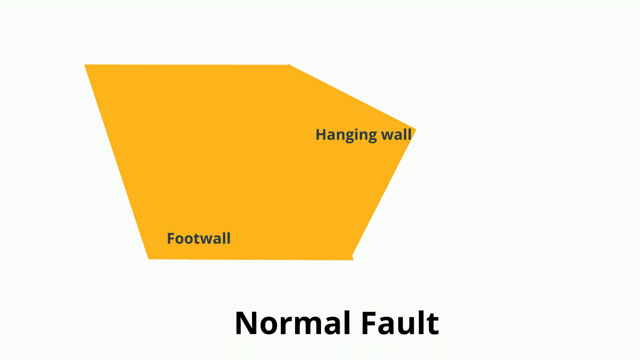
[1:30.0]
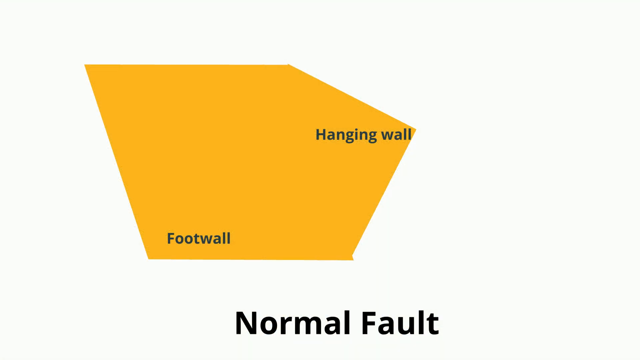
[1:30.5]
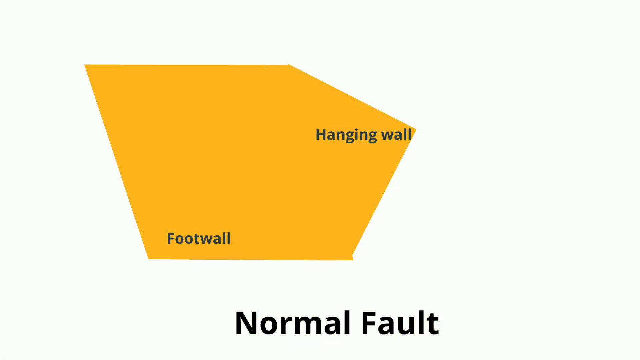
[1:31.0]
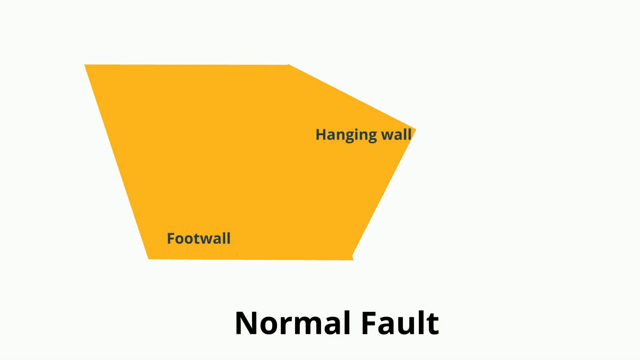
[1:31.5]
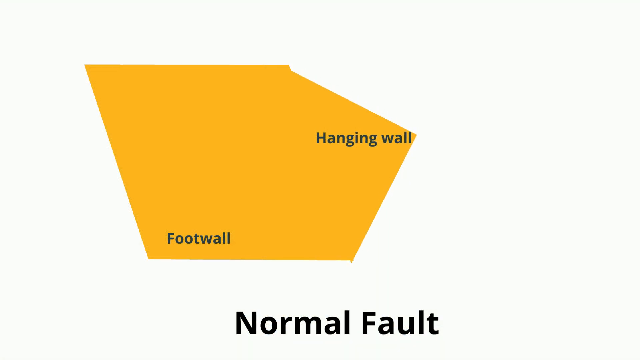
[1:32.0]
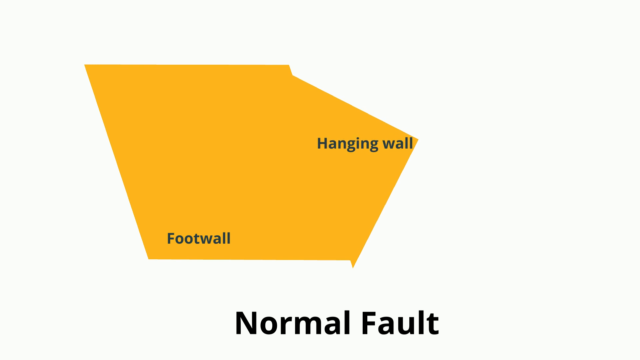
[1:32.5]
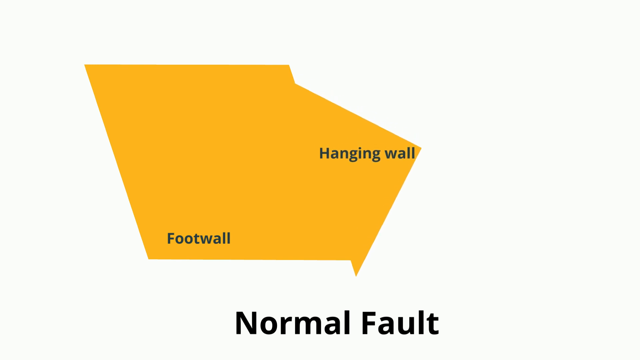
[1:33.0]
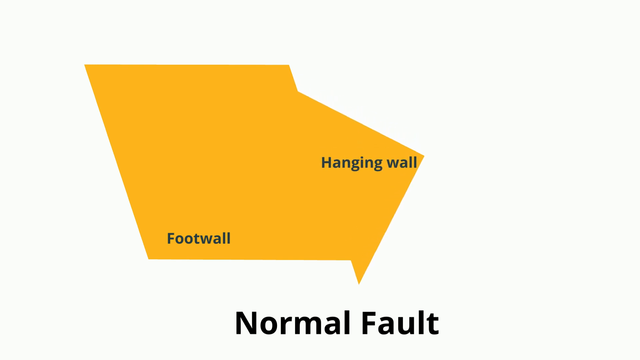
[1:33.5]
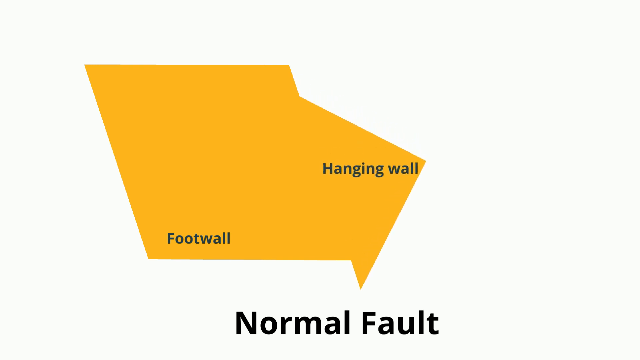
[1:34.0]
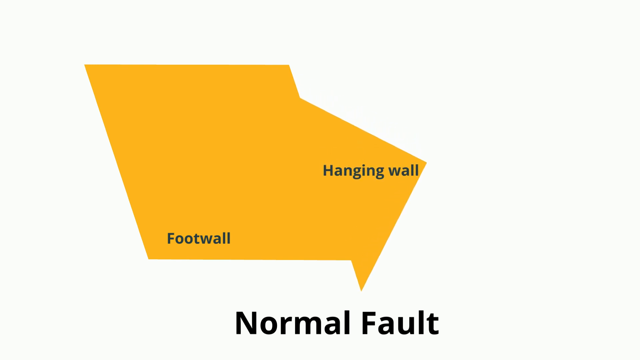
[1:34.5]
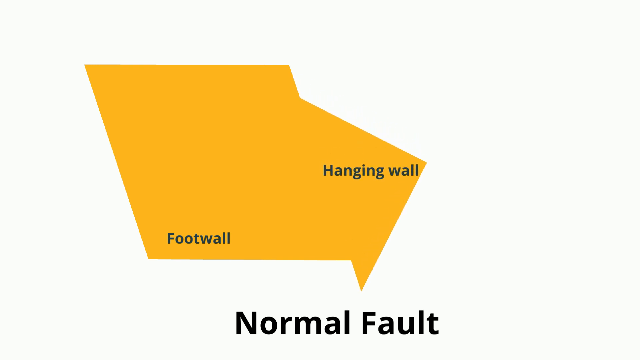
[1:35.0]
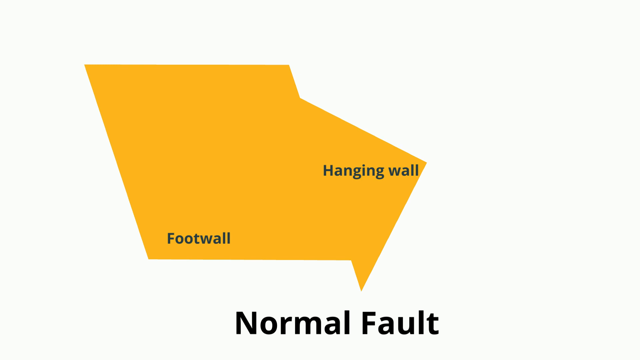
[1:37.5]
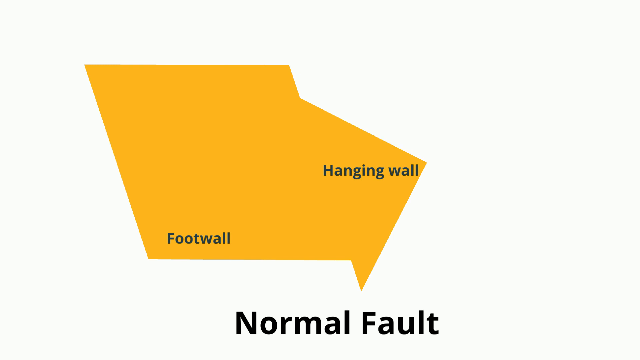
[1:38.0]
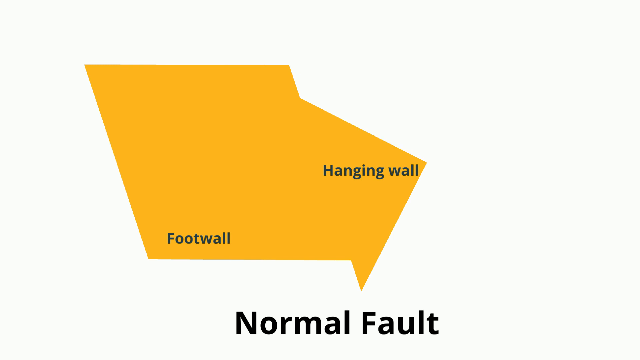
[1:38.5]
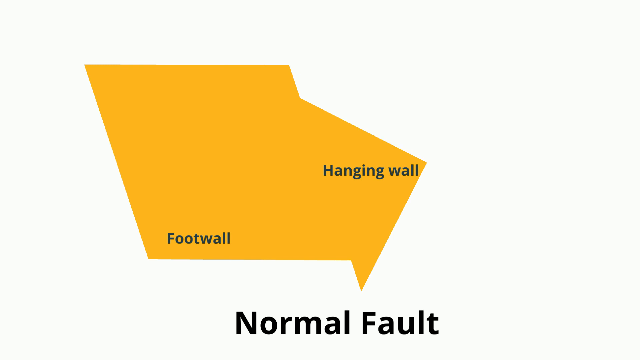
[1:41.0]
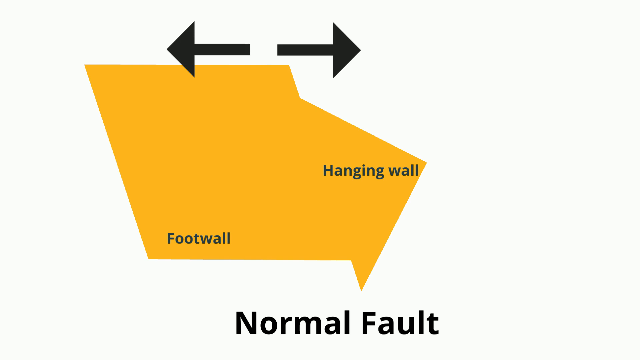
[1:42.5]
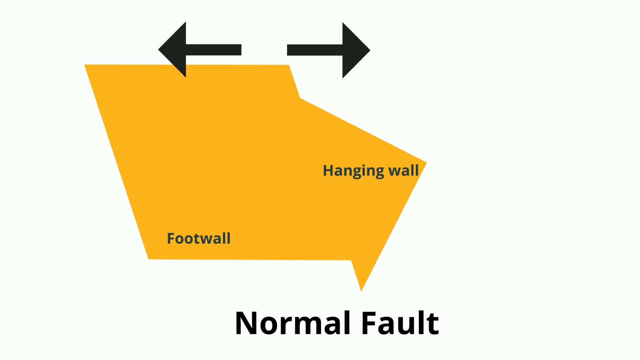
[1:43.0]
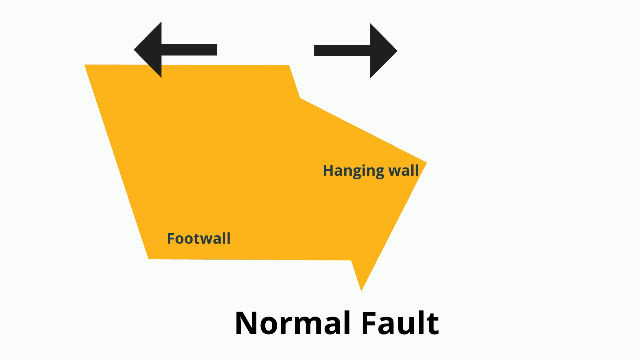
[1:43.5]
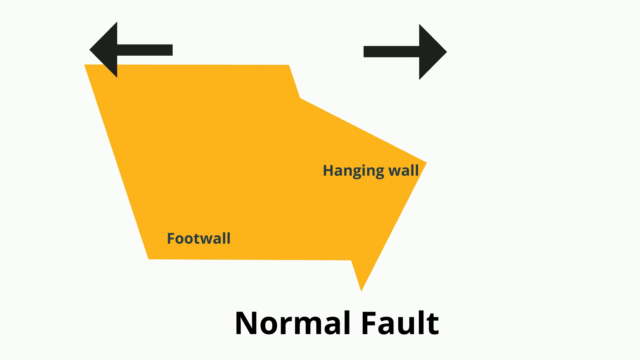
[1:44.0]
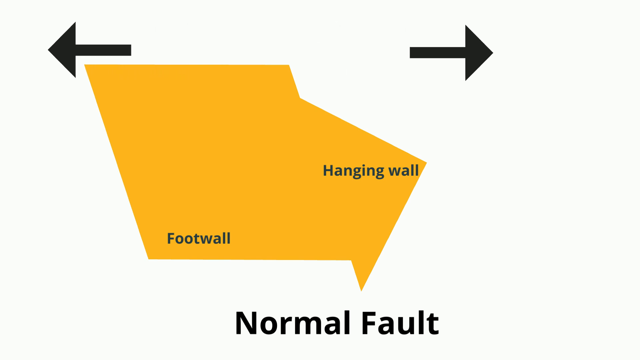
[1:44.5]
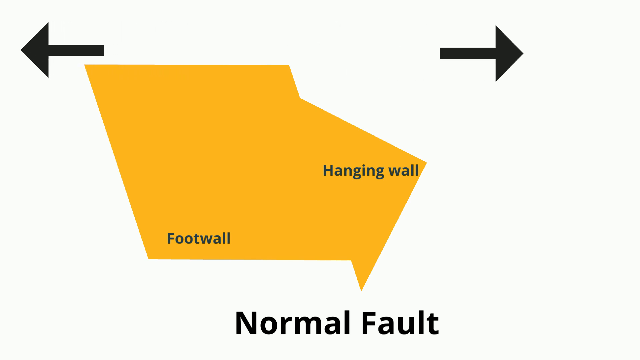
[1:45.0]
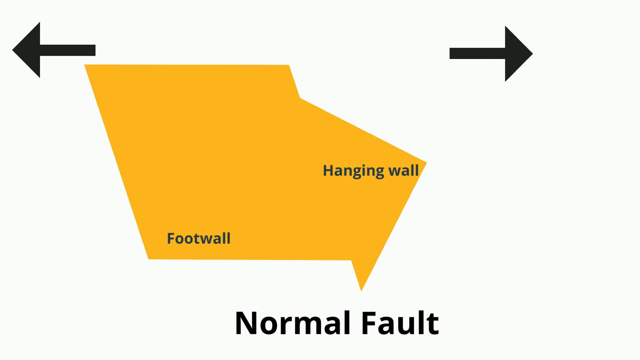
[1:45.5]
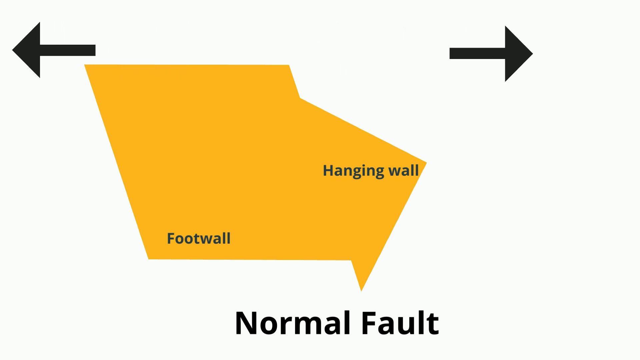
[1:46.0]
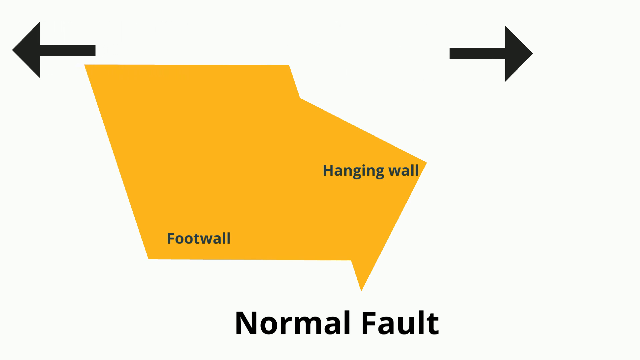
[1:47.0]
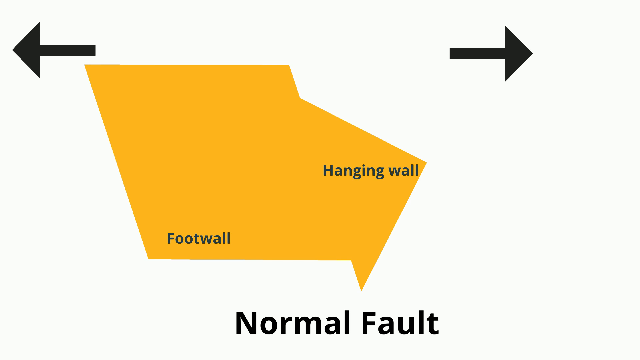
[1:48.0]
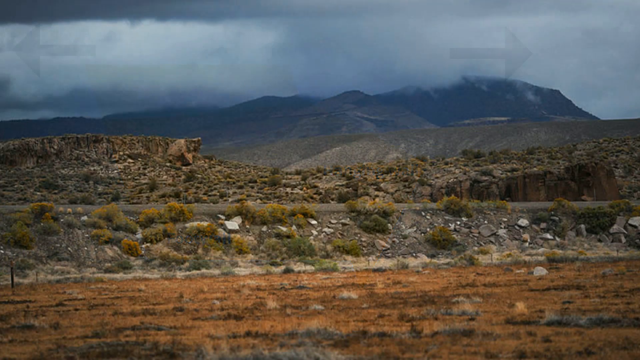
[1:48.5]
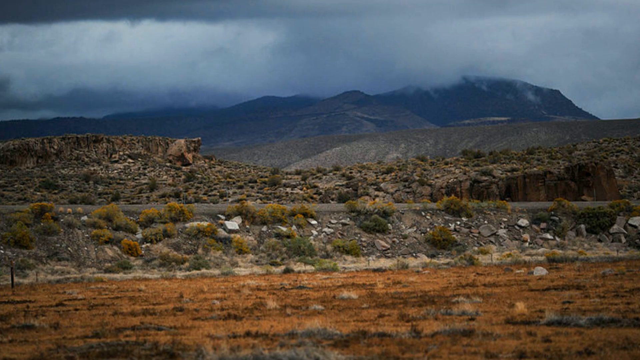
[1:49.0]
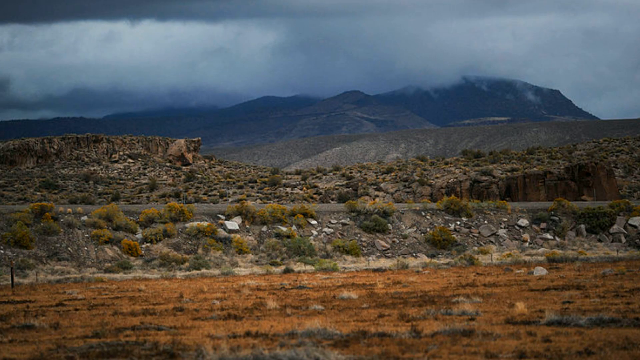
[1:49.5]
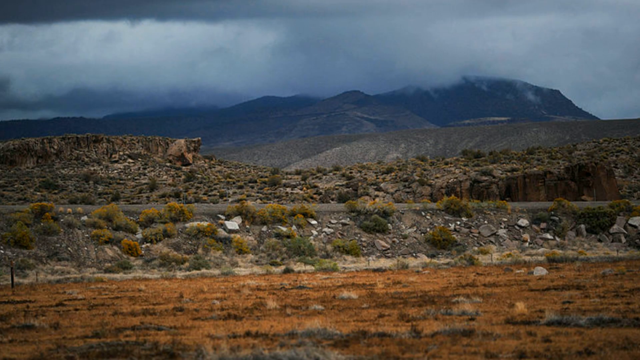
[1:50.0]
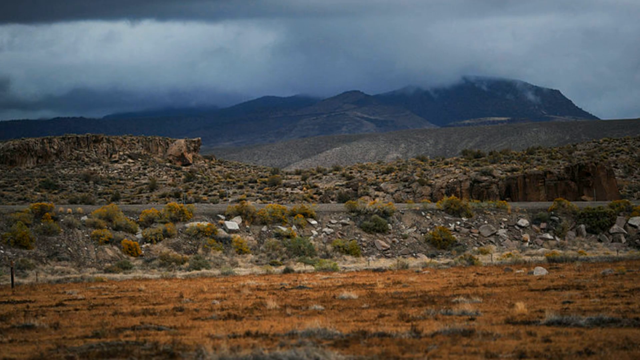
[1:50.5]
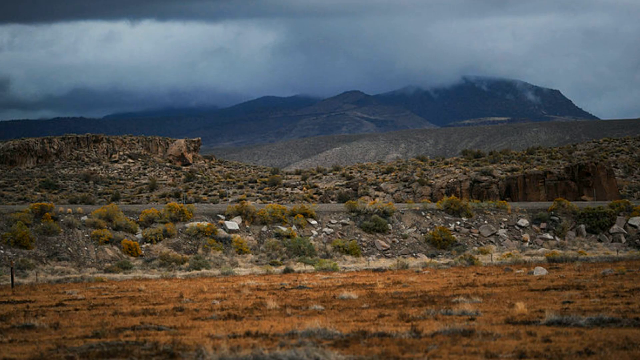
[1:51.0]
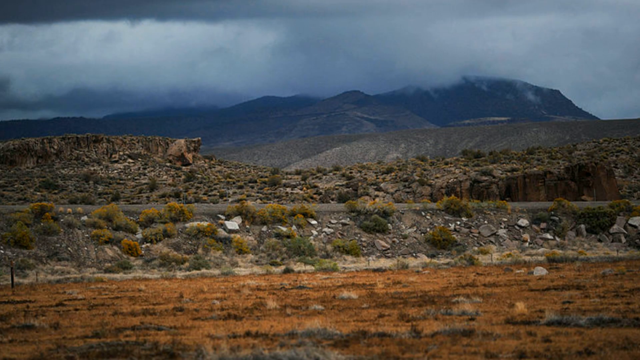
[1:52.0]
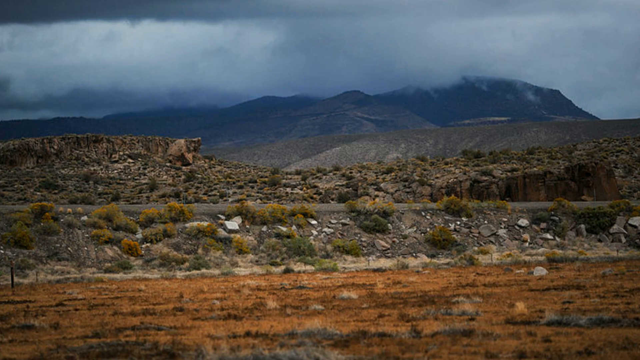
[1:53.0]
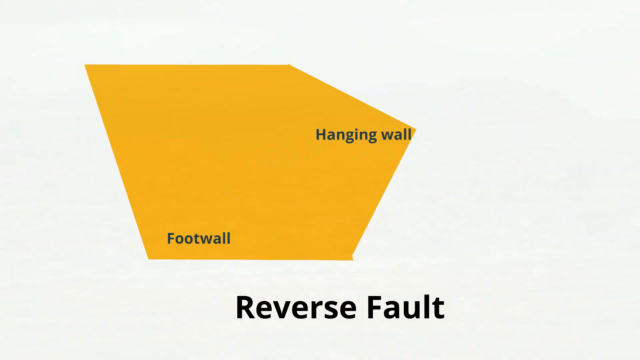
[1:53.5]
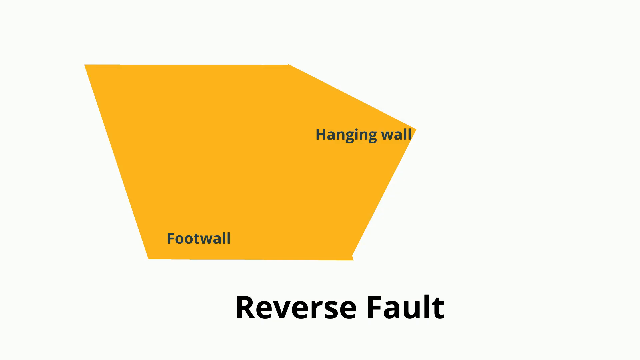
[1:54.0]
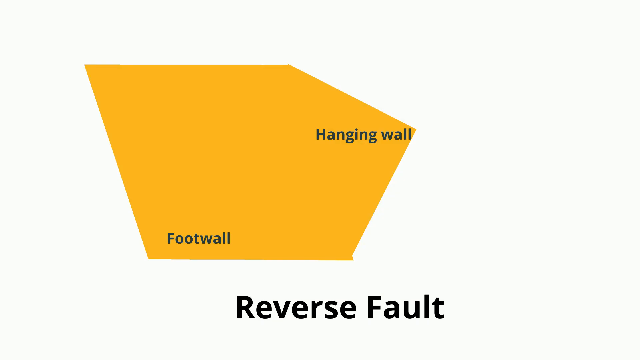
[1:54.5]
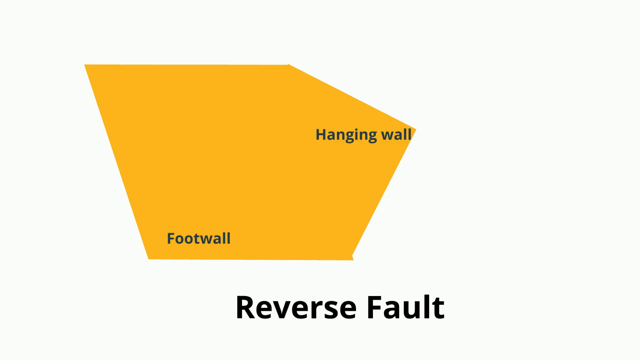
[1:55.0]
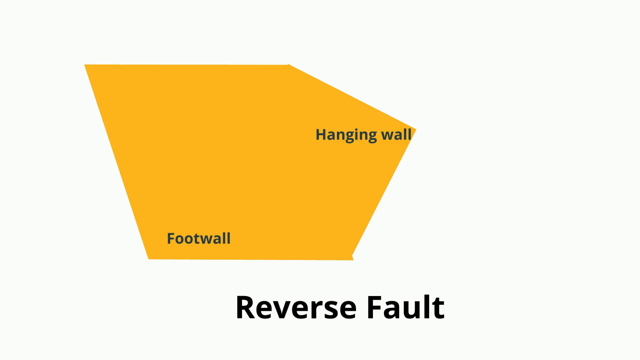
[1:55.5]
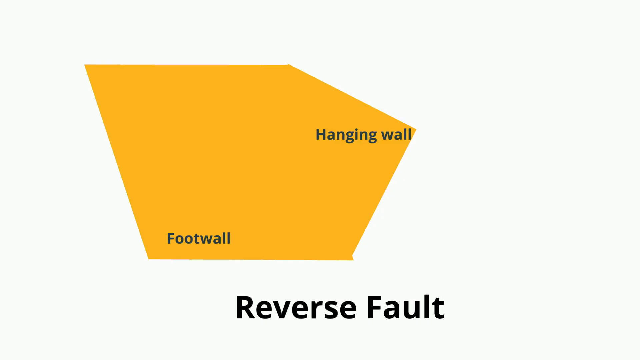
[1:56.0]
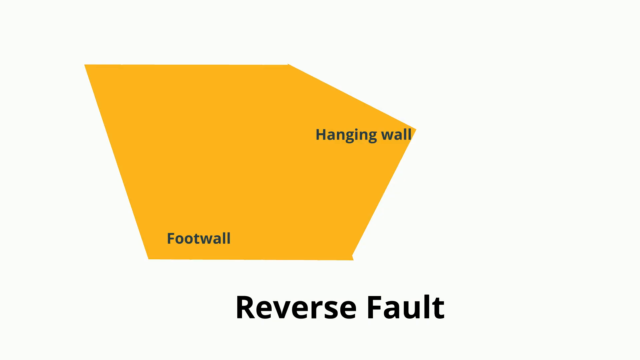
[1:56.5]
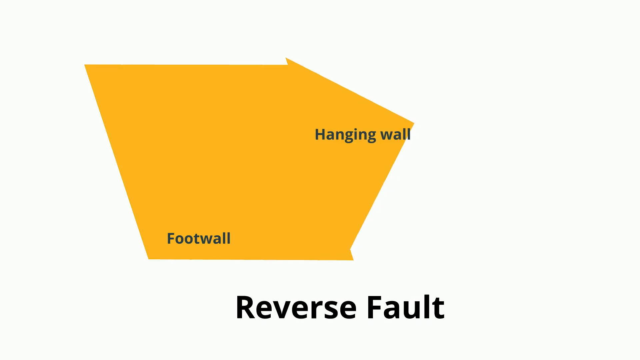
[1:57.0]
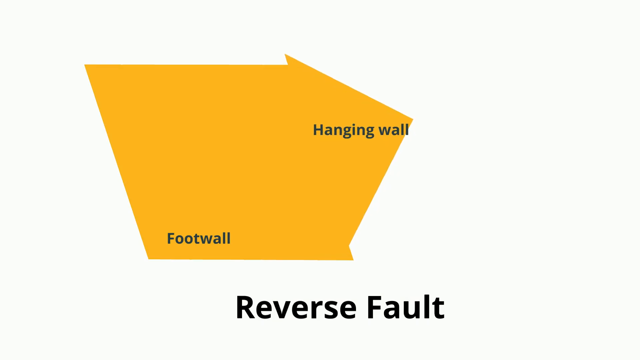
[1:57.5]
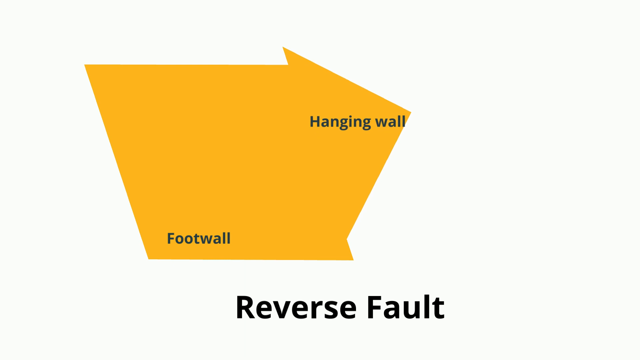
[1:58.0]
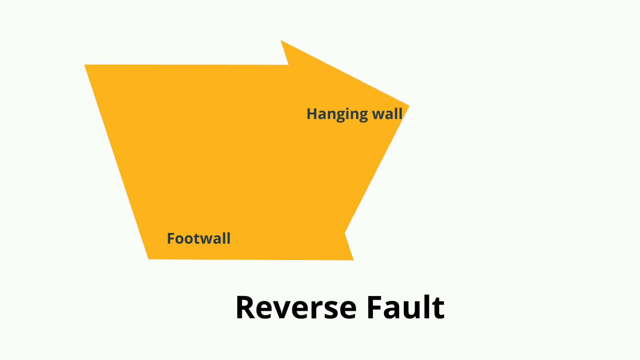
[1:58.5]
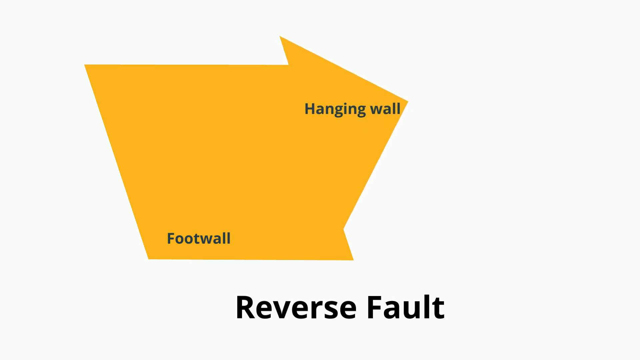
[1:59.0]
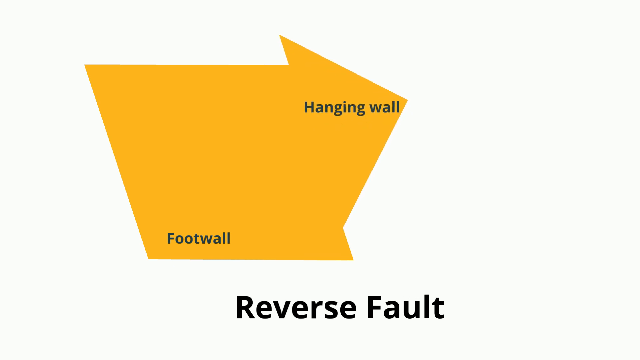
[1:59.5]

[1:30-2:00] A blue planet appears against a black background, then is shown with gold lines as the continents begin to separate, with the African continent shown prominently. In an office setting, a white man breaks his pencil. Rocks and their folds follow, then illustrations of three types of folds, the normal fold, the reverse fold, and the strike-slip fold, with examples of each. For the strike-slip fold, the San Andreas is shown as an example; for the reverse fold, different mountains next to each other appear to be together in the end. The video ends with a cartoon illustration that thanks the viewer for watching and asks them to please share and subscribe.